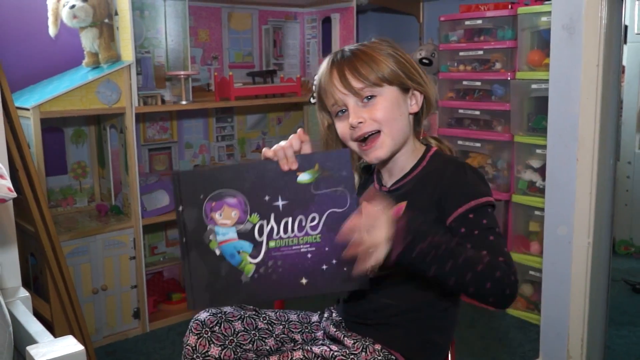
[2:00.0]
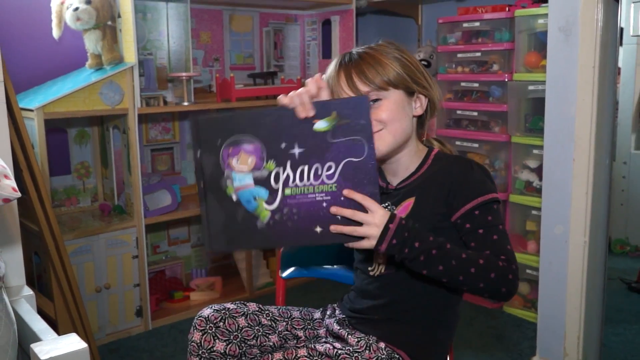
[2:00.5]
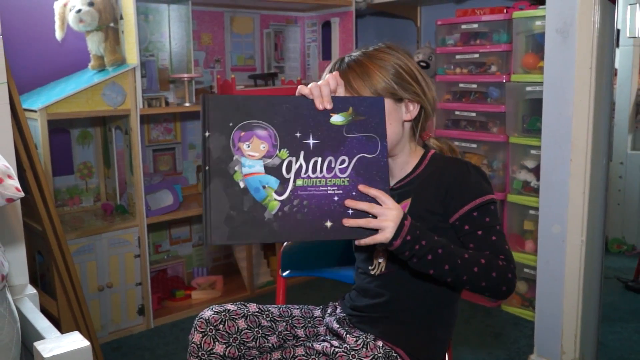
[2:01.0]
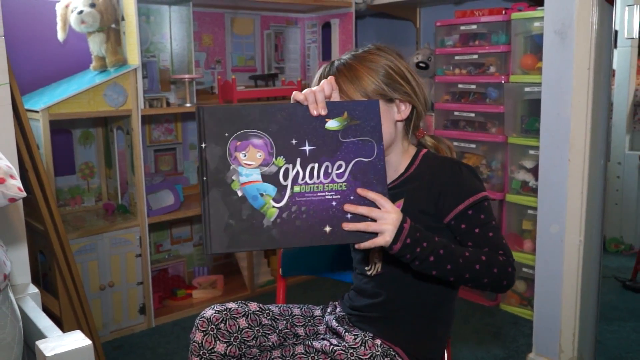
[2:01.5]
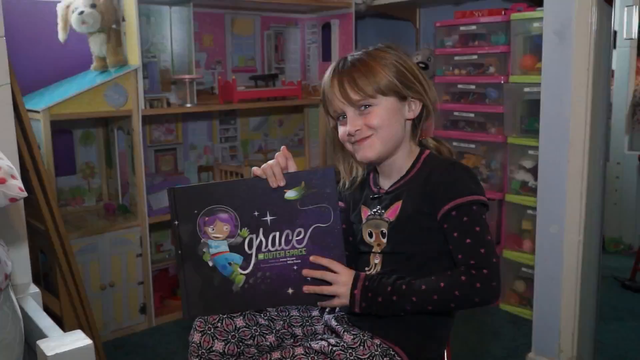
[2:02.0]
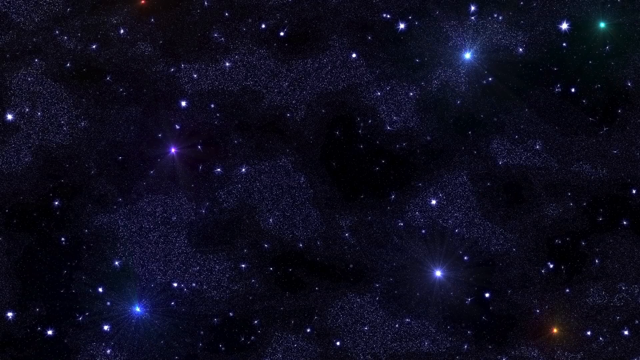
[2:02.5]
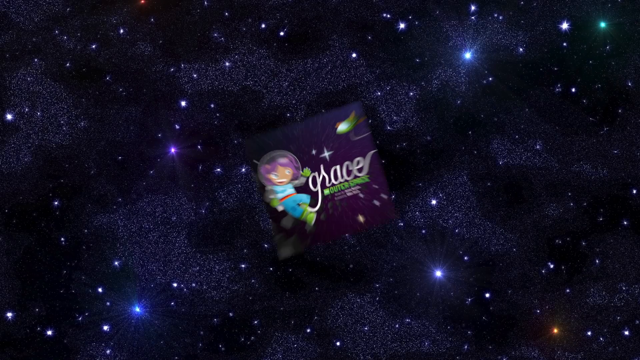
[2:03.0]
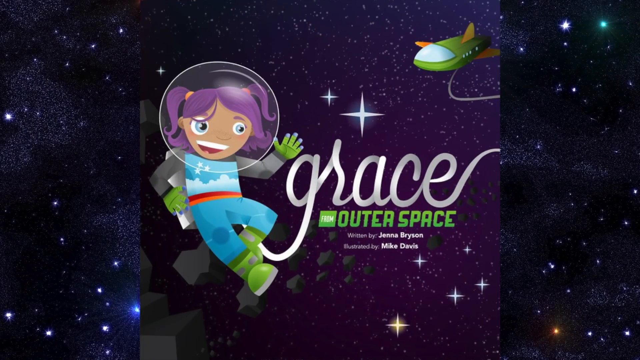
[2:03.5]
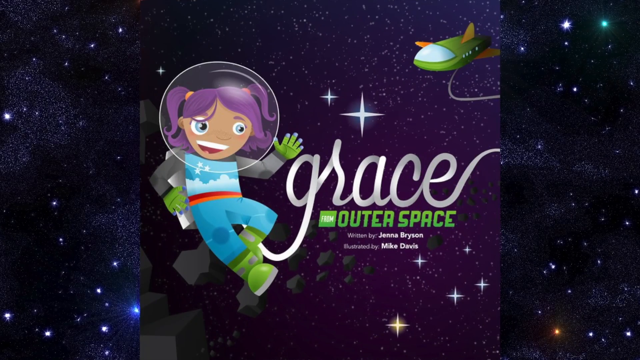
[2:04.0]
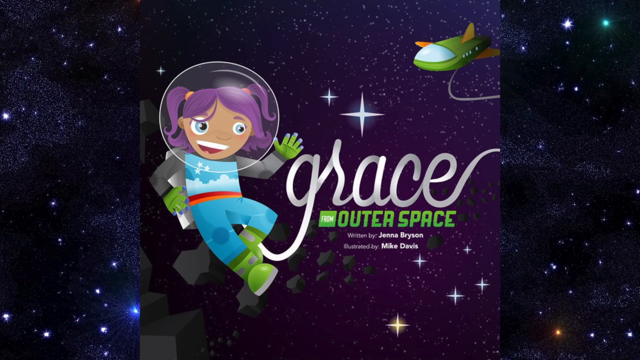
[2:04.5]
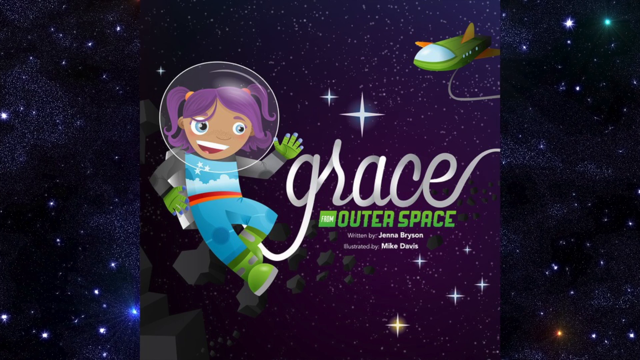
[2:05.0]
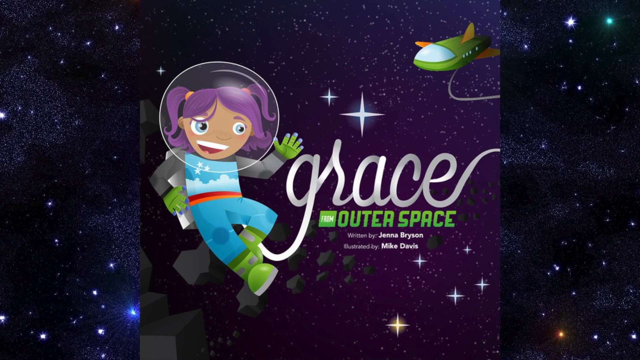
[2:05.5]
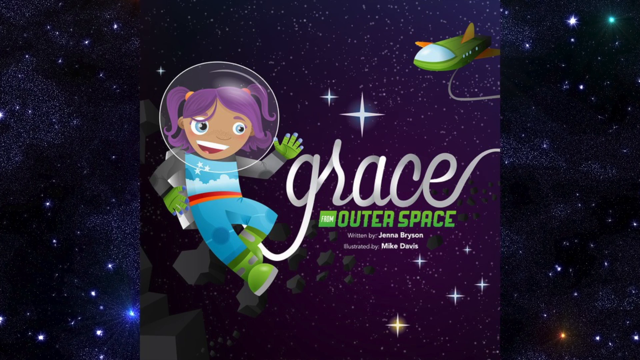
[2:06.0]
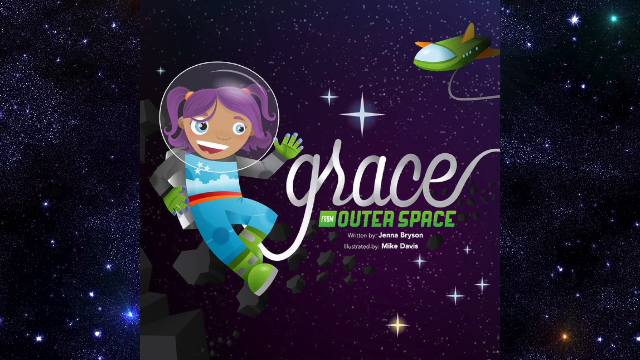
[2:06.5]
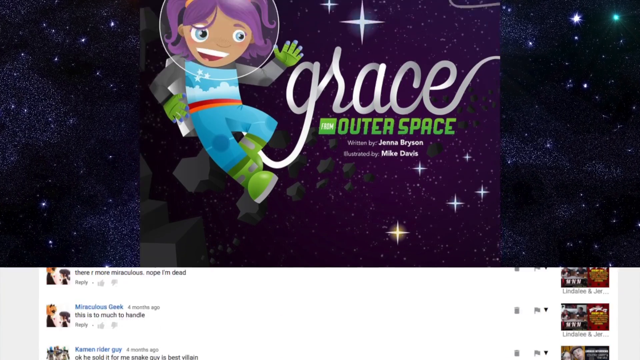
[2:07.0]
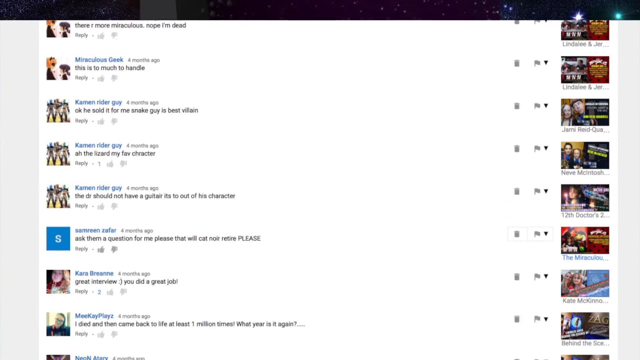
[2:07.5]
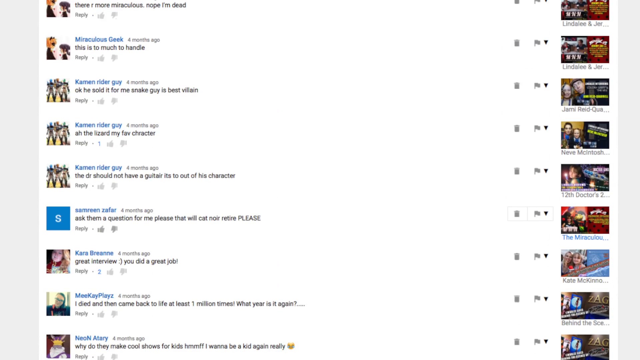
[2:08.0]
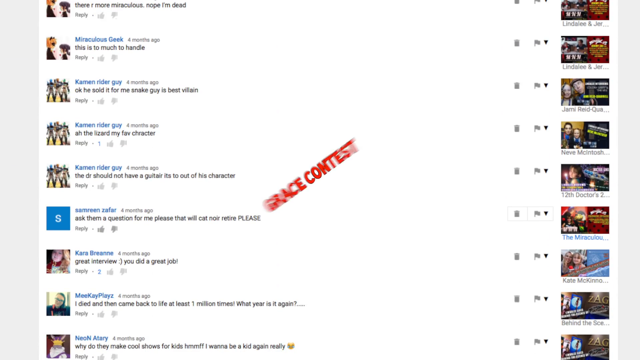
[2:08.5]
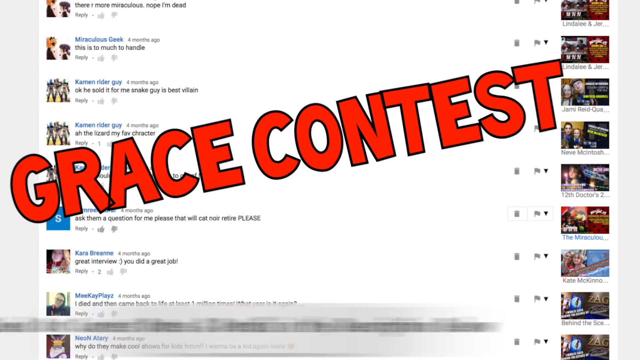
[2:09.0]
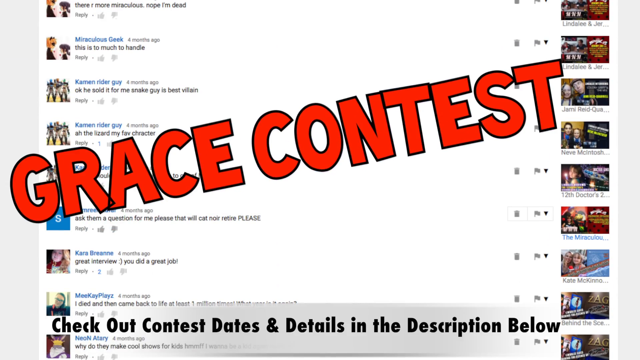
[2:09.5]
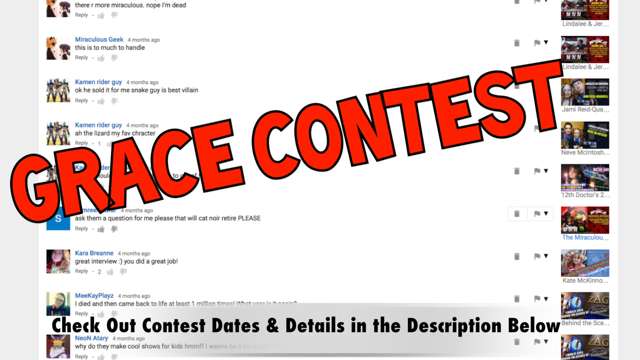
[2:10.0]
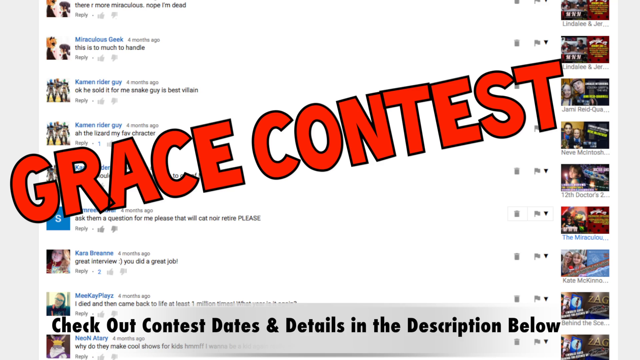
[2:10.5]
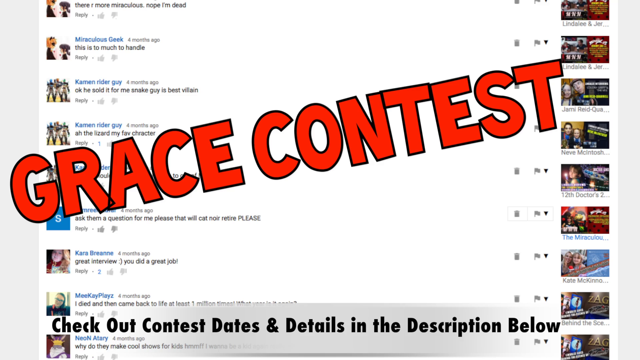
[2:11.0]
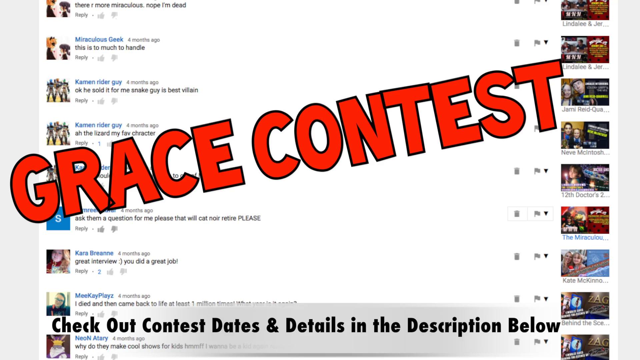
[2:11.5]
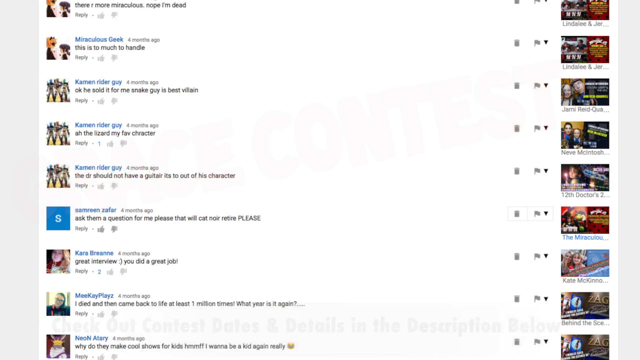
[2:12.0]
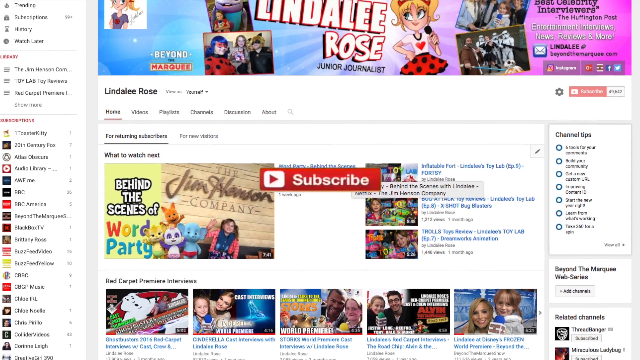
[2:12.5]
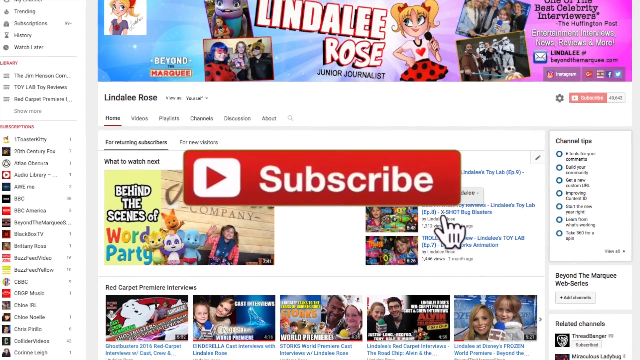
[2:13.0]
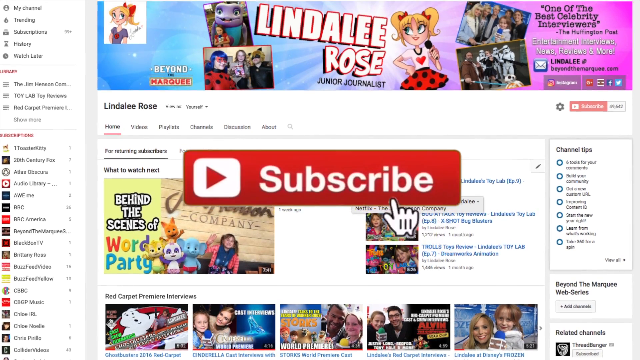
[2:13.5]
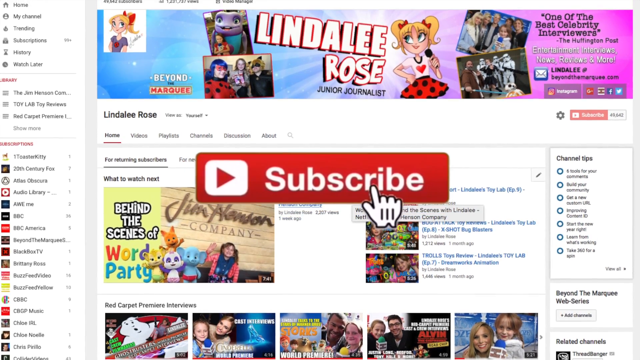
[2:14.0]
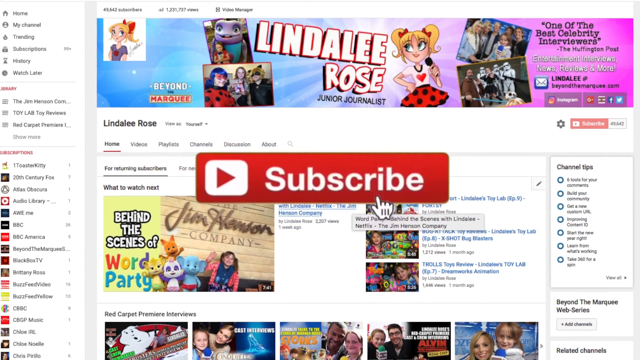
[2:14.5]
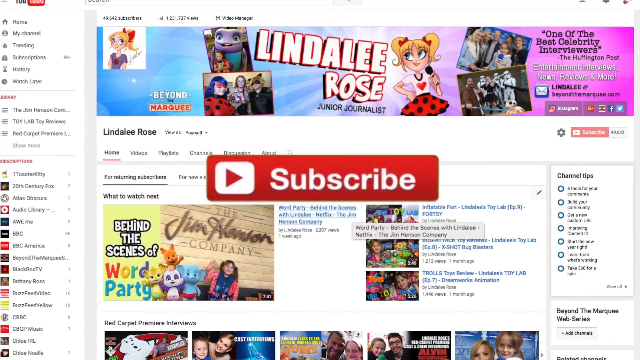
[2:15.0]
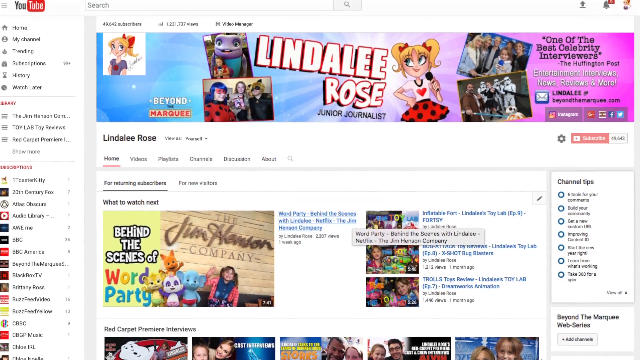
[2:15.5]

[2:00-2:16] The girl holds the book Grace from Outer Space up to the camera so her face is behind it, and shakes it slightly. She brings the book down and grins at the screen. The screen changes to an outer space scene of dark sky and stars, and the book comes from a distance into focus, showing the front cover "Grace from Outer Space" with the purple-haired young Grace waving from space, joined through her name by her air pipe to the green spaceship behind. The front cover shows the book was written by Jenna Bryson and illustrated by Mike Davis. The page then scrolls down to show comments. A caption in capital red letters, "Grace Contest", comes across the screen, and a caption in black appears at the bottom: "Check out contest dates and details in the description below." A red subscribe button appears with a mouse hand cursor, then disappears.